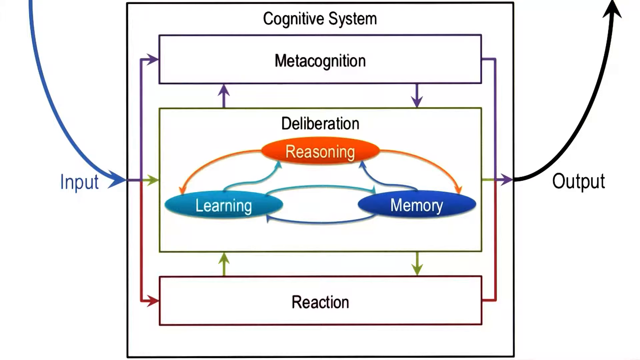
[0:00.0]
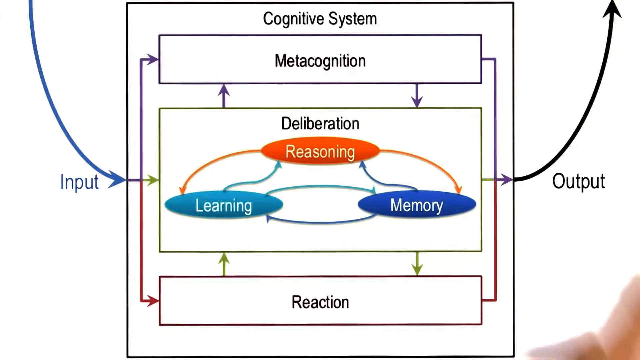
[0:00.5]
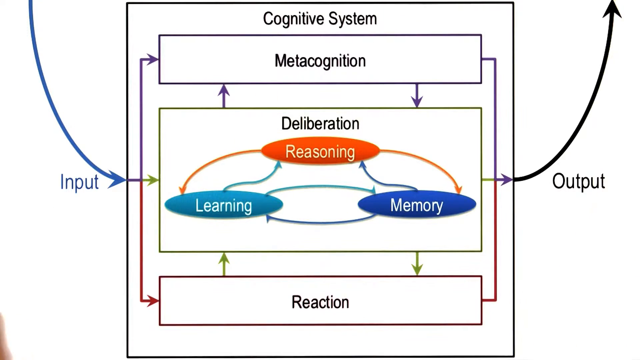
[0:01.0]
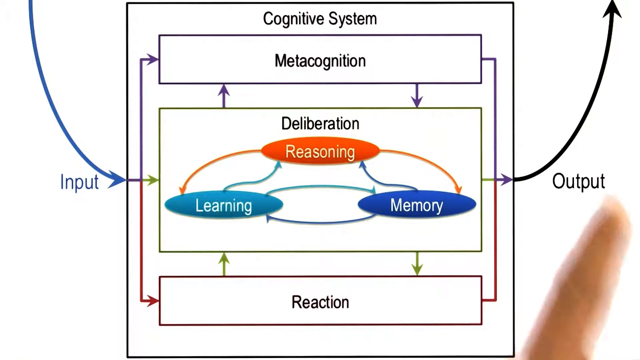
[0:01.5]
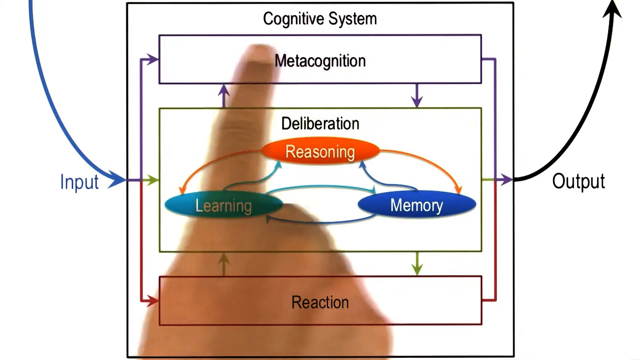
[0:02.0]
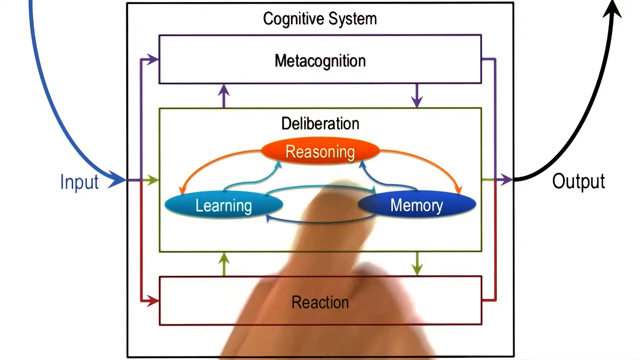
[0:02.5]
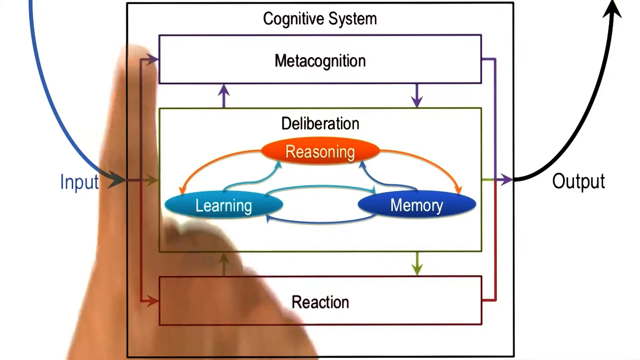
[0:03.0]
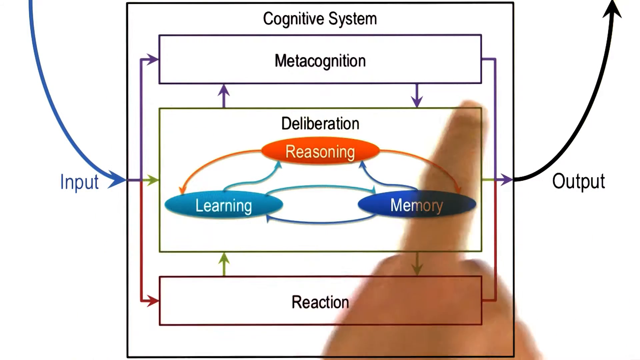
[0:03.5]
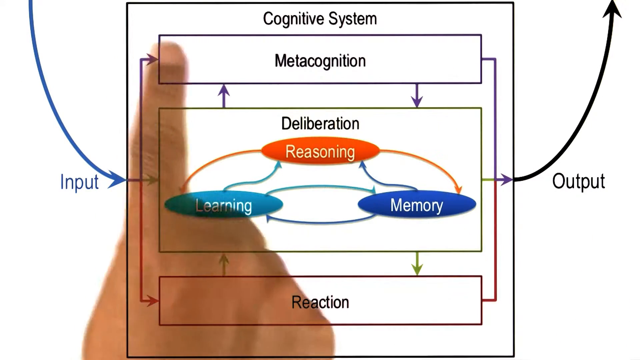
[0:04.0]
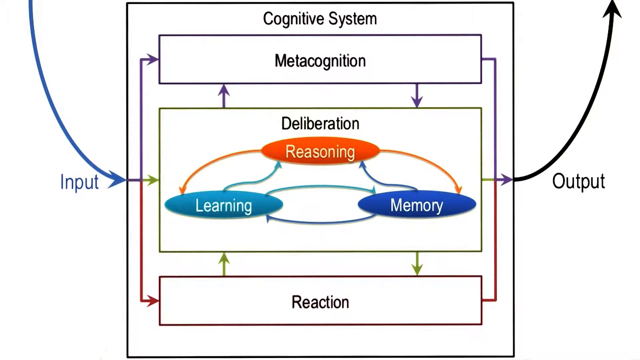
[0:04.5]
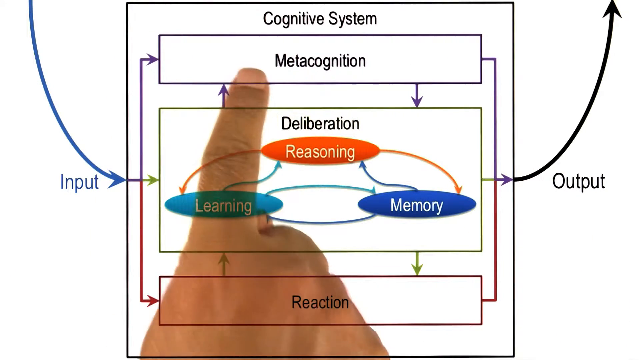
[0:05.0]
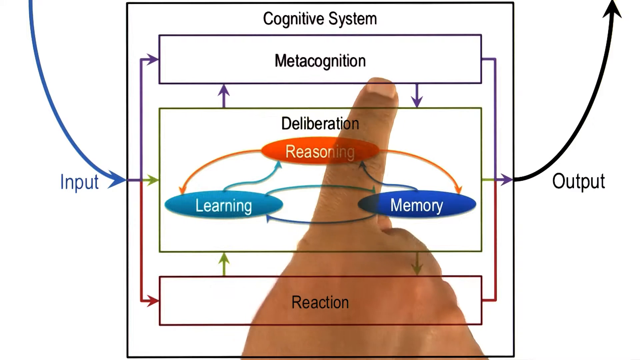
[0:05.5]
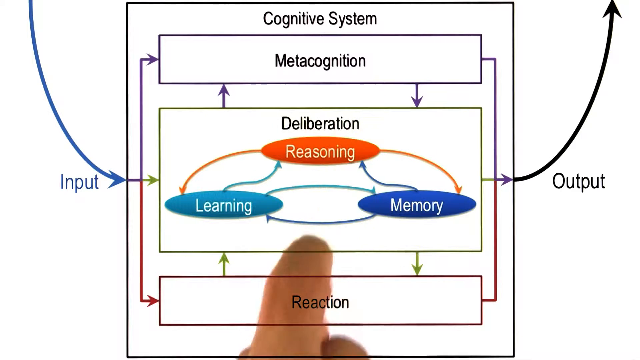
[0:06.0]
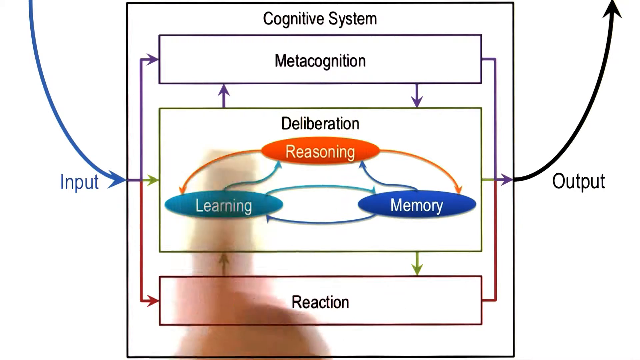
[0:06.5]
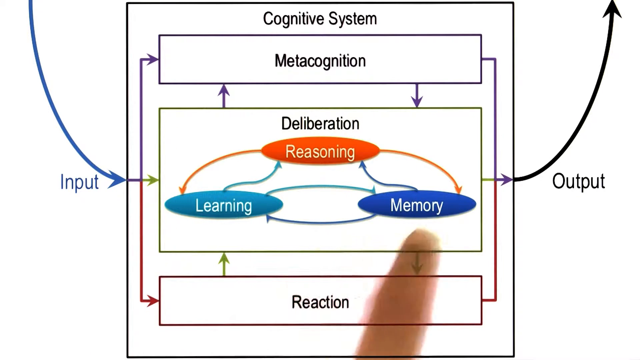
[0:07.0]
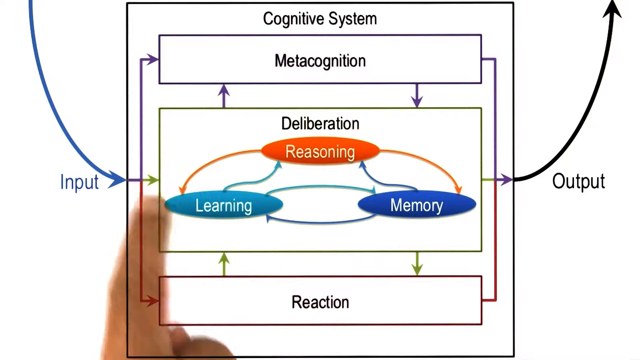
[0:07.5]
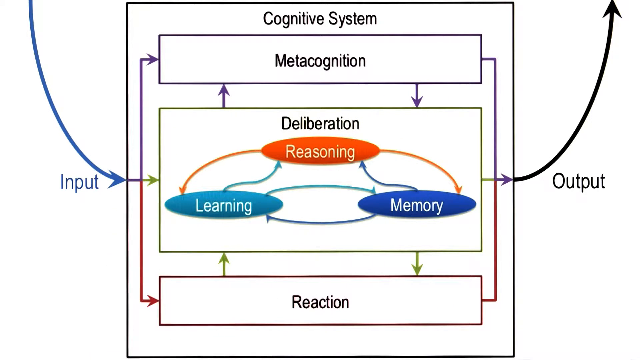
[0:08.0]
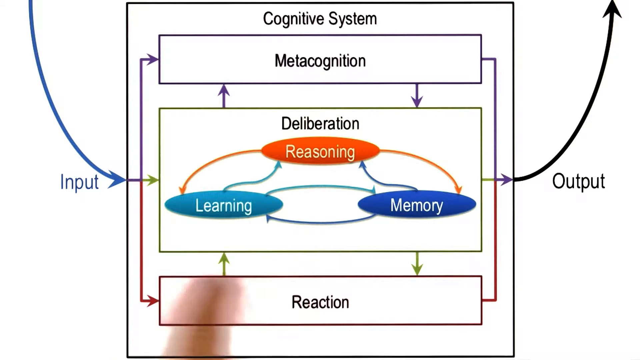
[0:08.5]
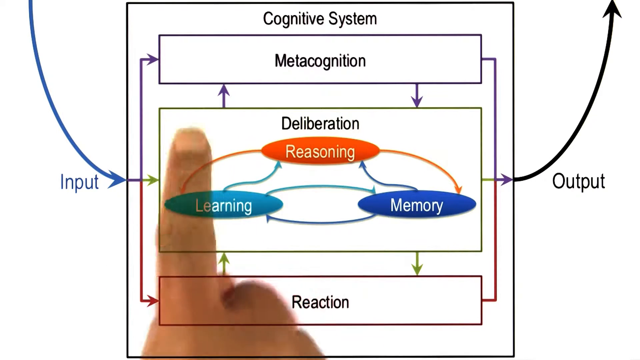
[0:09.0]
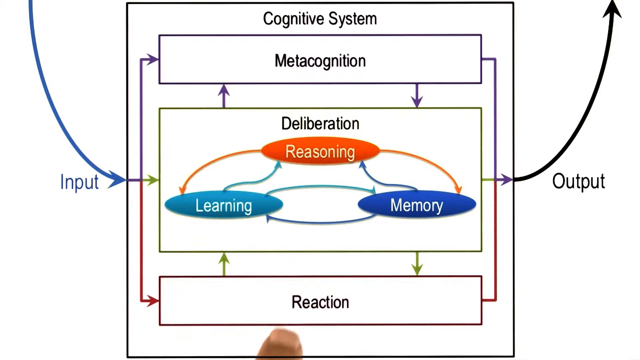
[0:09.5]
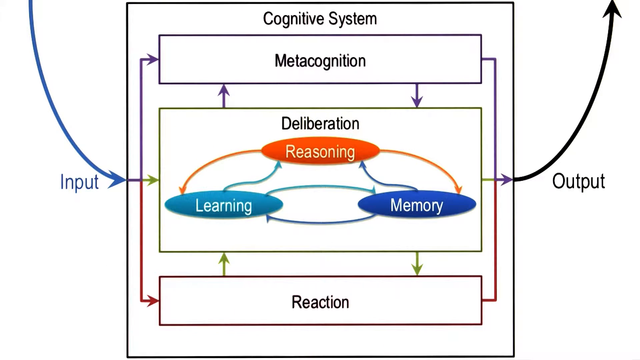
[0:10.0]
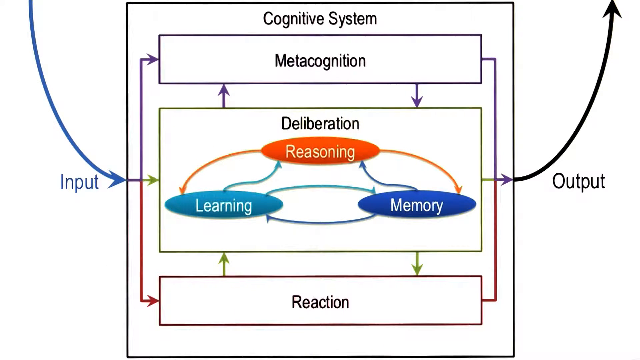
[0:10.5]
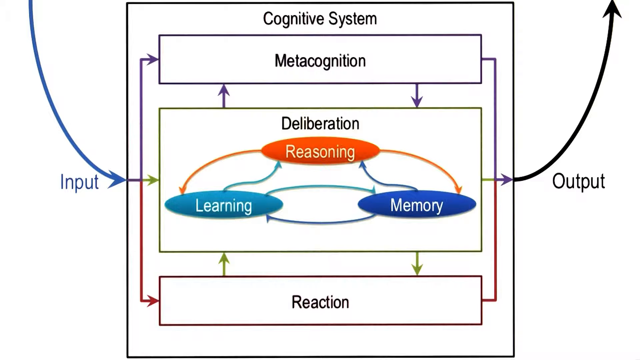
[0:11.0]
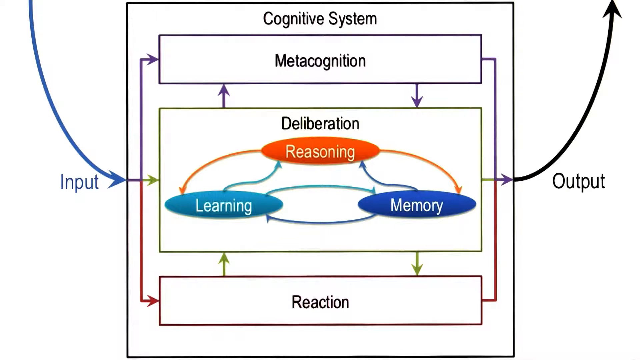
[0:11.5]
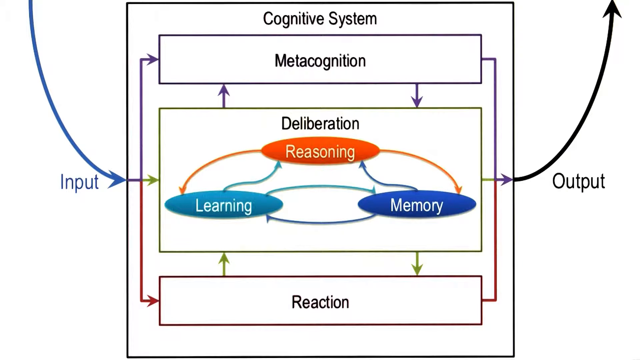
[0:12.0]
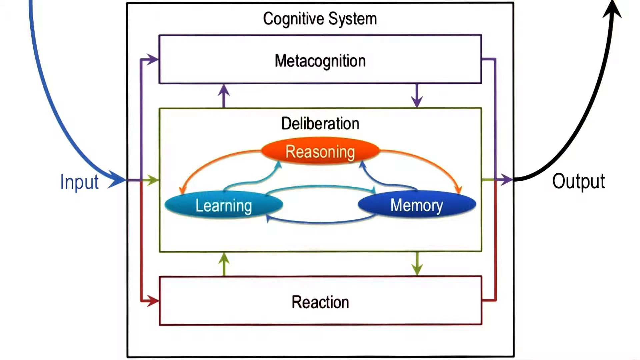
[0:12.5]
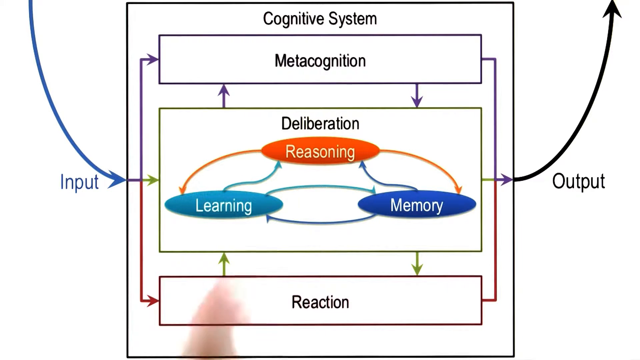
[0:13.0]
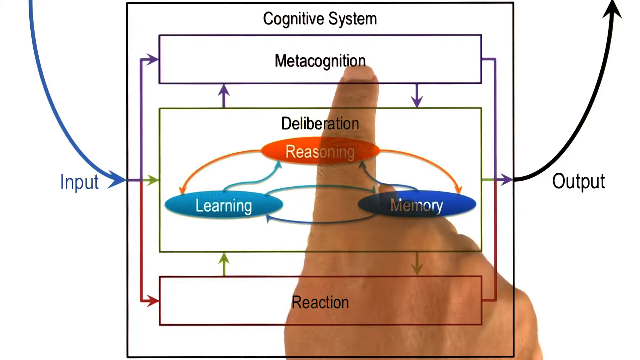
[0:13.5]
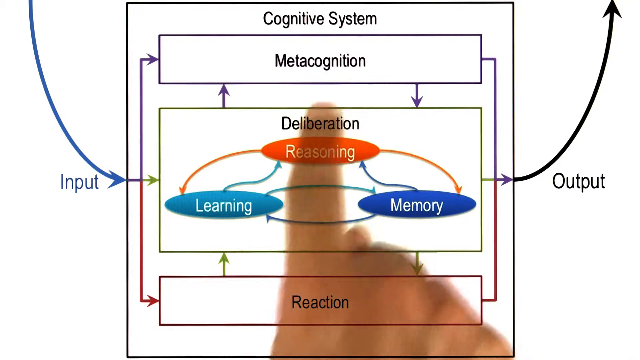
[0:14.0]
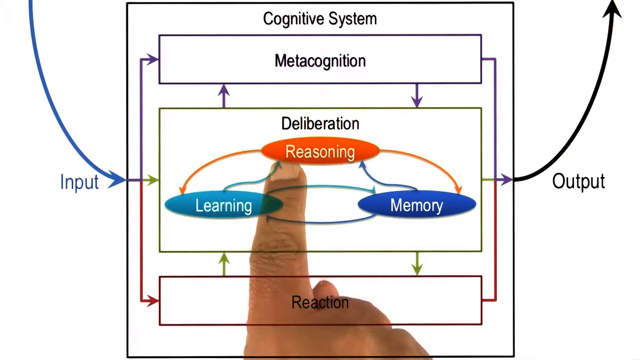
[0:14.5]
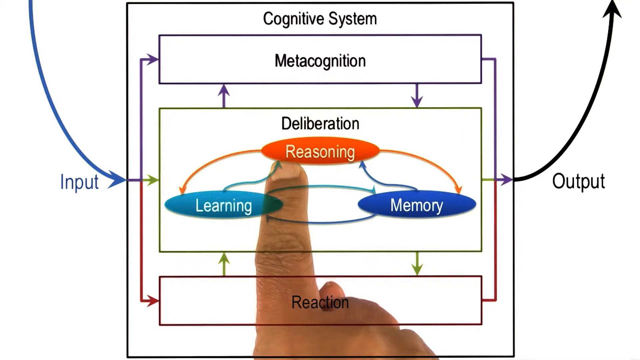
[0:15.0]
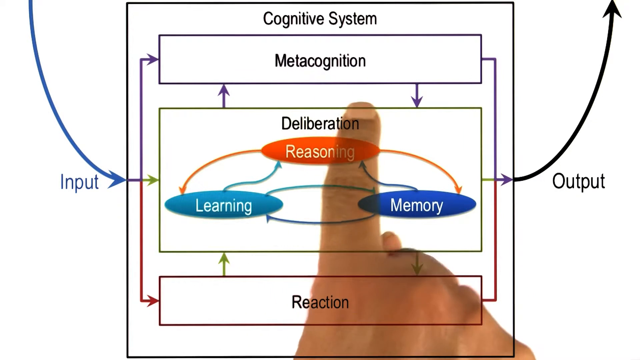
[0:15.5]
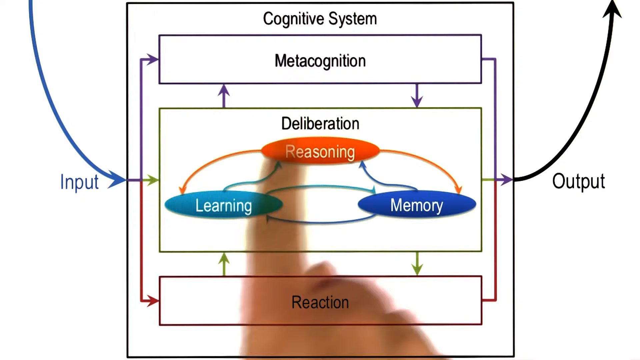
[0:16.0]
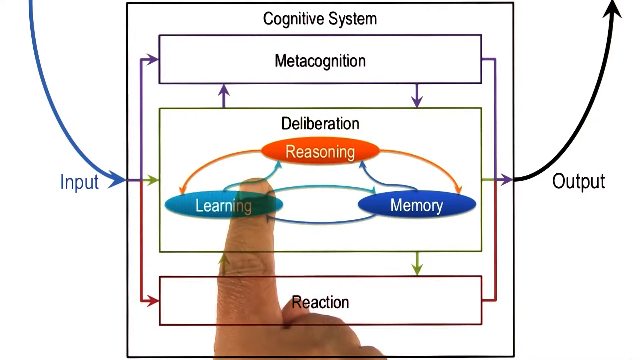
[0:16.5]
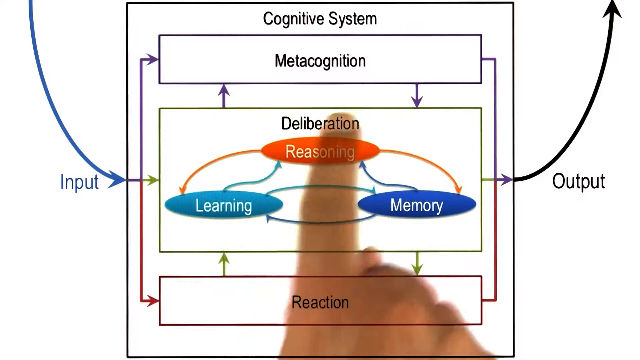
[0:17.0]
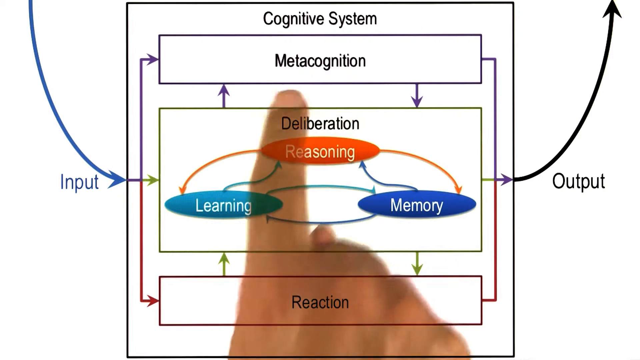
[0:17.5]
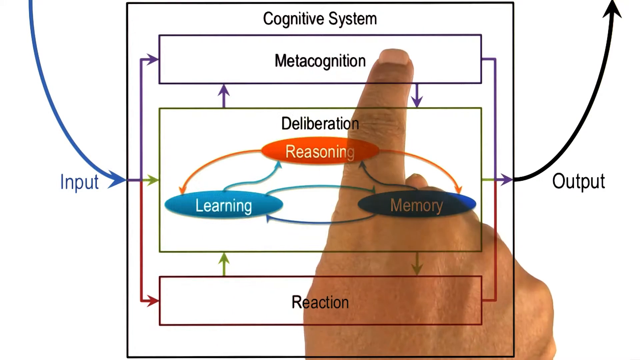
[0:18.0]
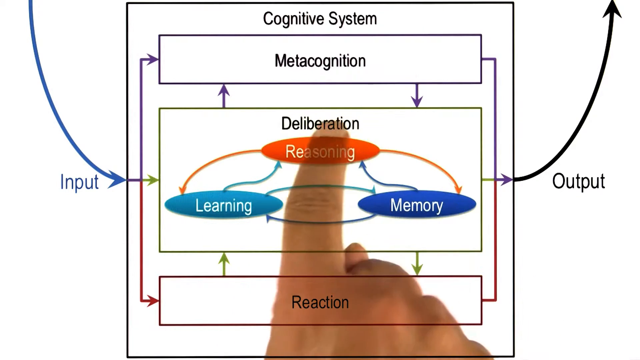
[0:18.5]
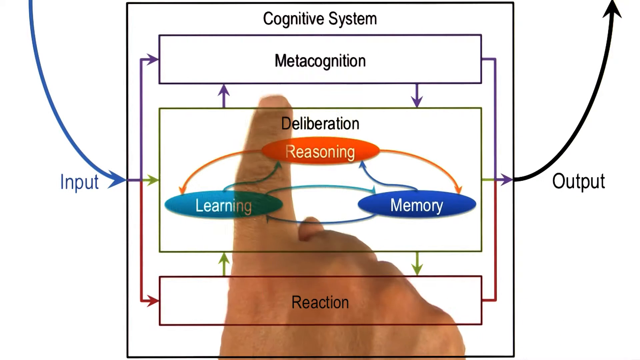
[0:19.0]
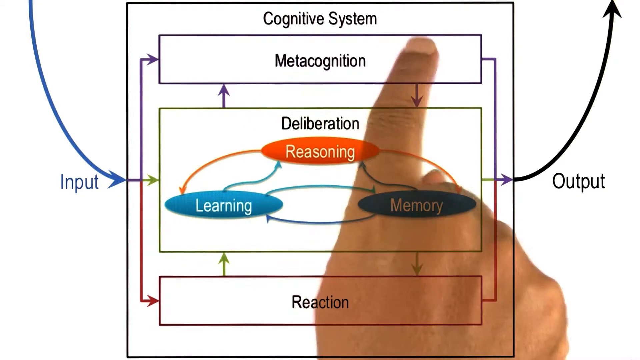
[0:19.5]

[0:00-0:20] A graph is being explained. A human hand appears on the screen, circling the graph, and points to the first wording on it, "cognitive system", followed by "metacognition". The hand also points out the middle portion of the graph, where "deliberation", "reasoning", "learning" and "memory" are written, with arrows pointing in and out of this wording. There is also a part where "reaction" is written, with an arrow facing down and an arrow facing up. Arrows on the sides show the input and the output; the input arrow is blue and the output arrow is black. The hand points to all these portions, apparently explaining what they mean. No faces are seen, only the human hand pointing to the graph, its words and its different colored arrows.